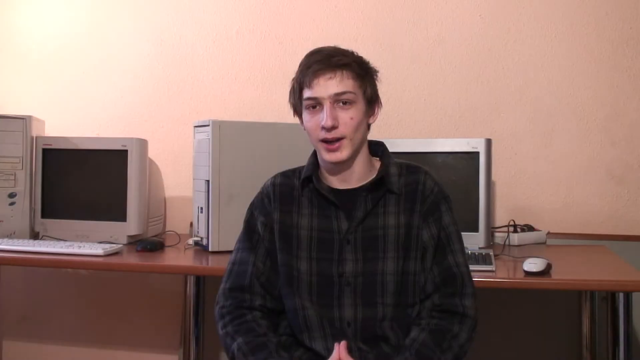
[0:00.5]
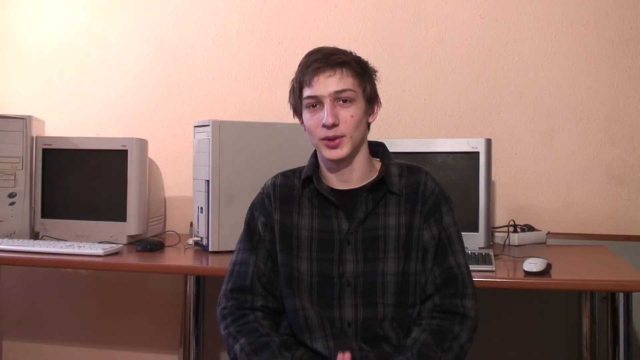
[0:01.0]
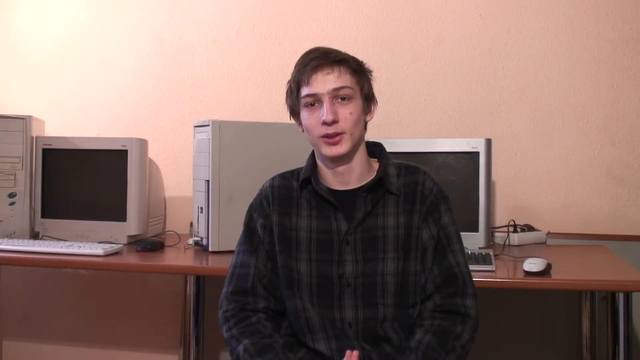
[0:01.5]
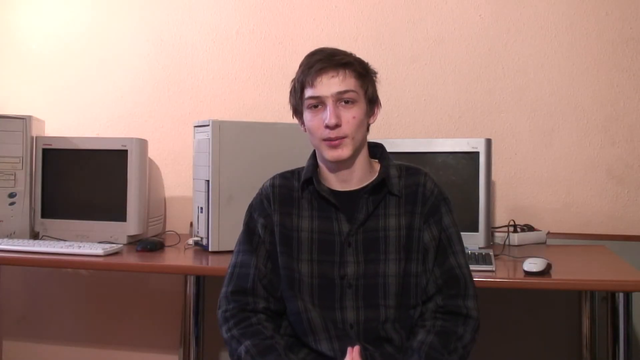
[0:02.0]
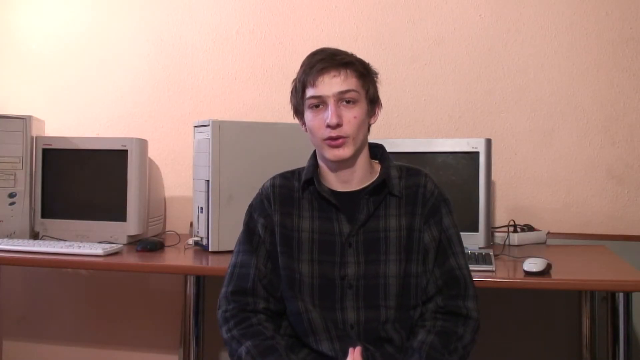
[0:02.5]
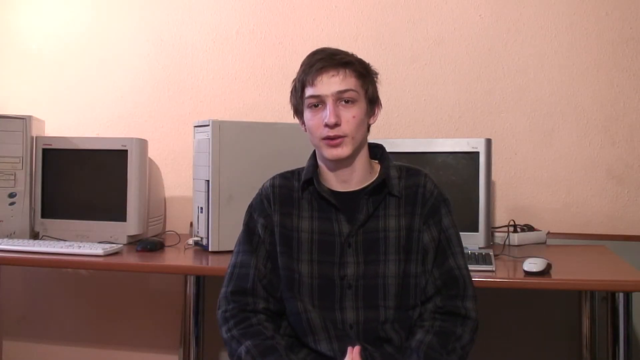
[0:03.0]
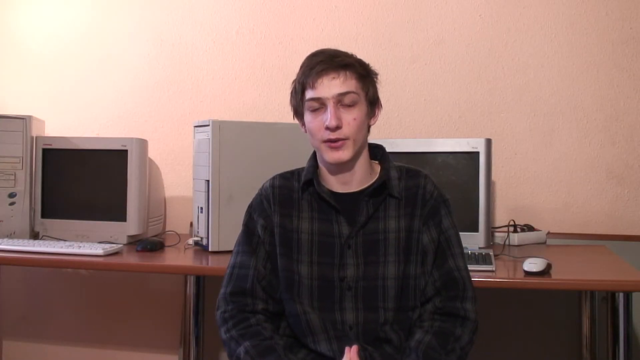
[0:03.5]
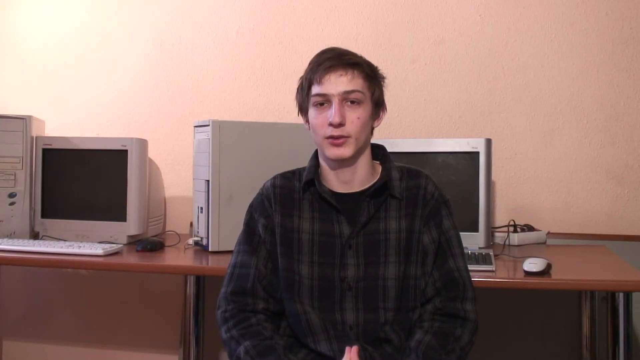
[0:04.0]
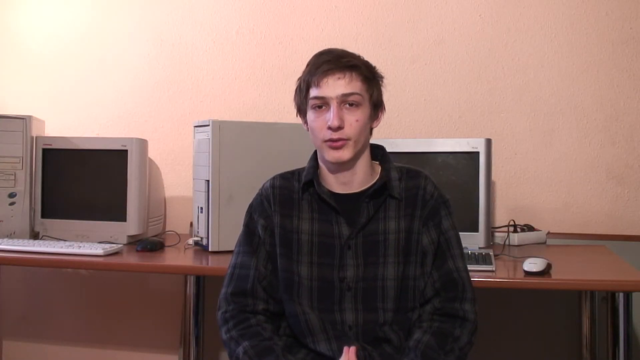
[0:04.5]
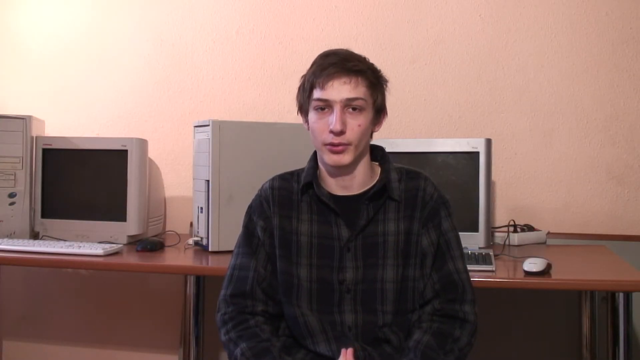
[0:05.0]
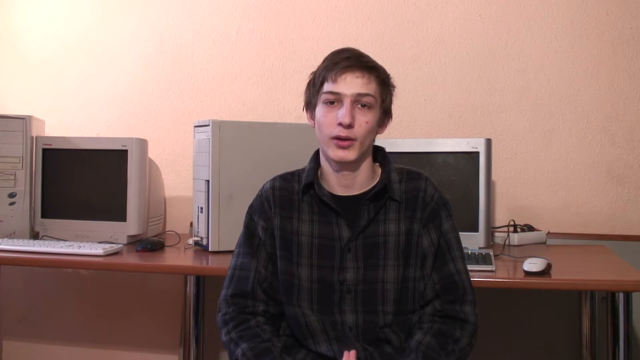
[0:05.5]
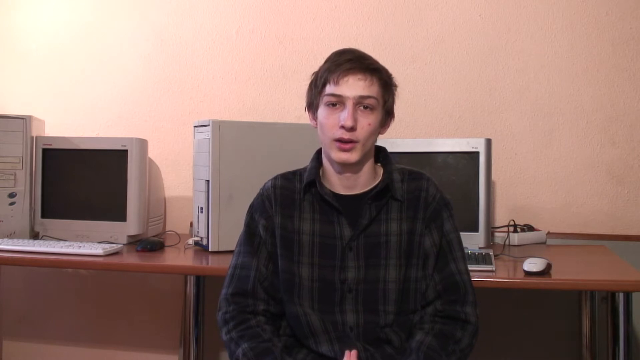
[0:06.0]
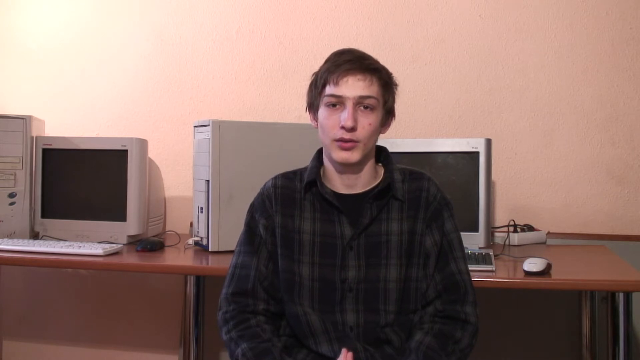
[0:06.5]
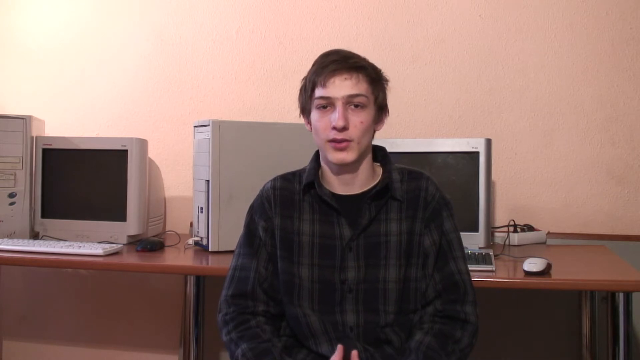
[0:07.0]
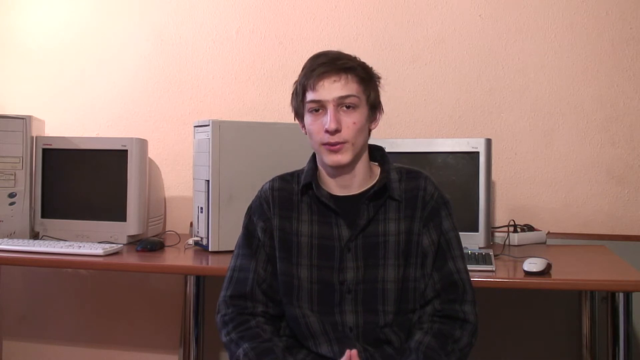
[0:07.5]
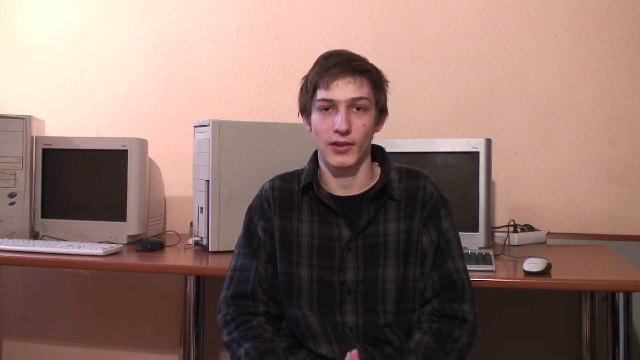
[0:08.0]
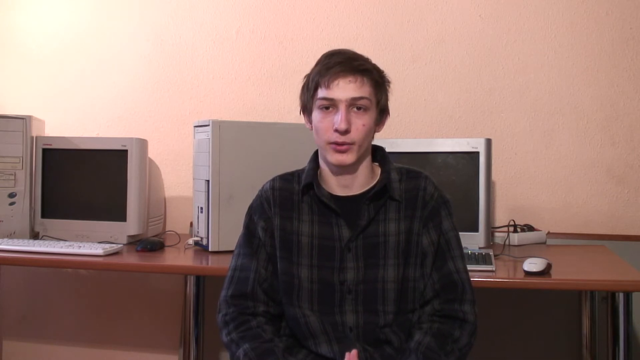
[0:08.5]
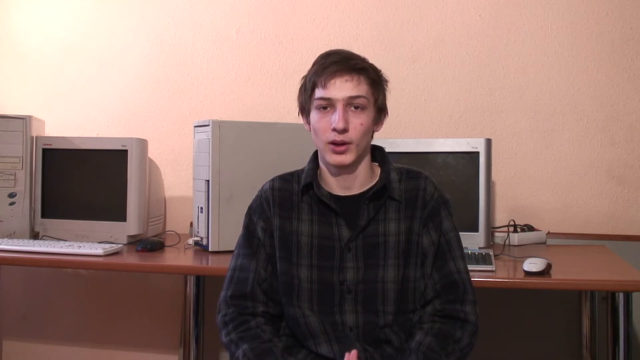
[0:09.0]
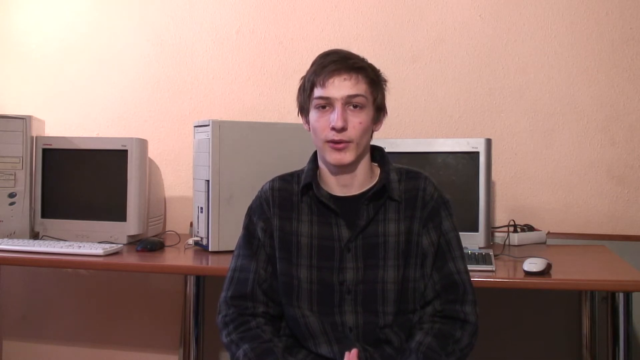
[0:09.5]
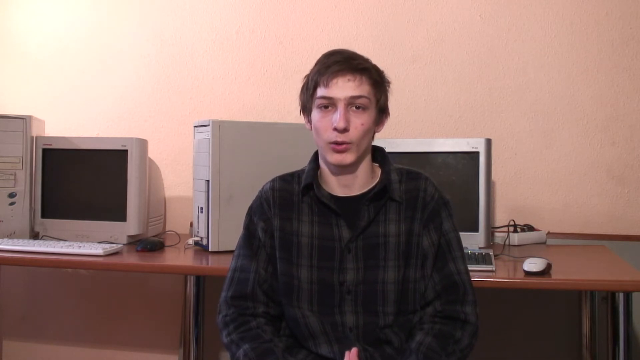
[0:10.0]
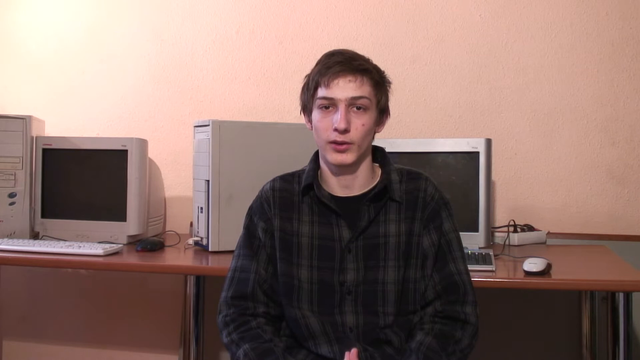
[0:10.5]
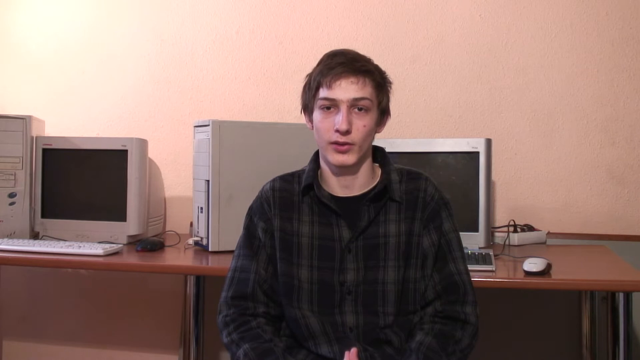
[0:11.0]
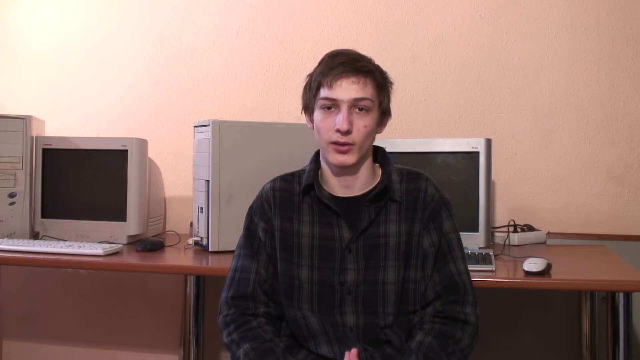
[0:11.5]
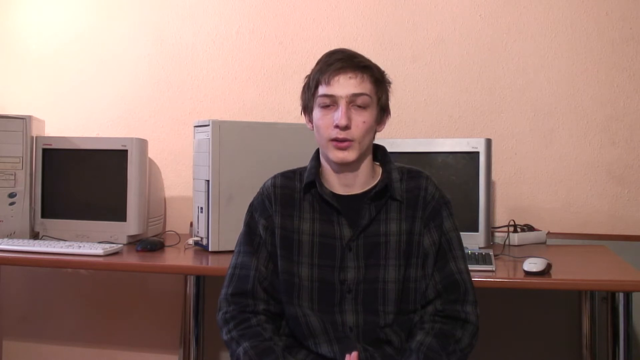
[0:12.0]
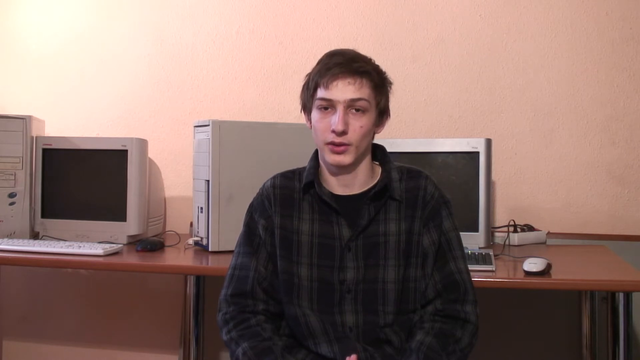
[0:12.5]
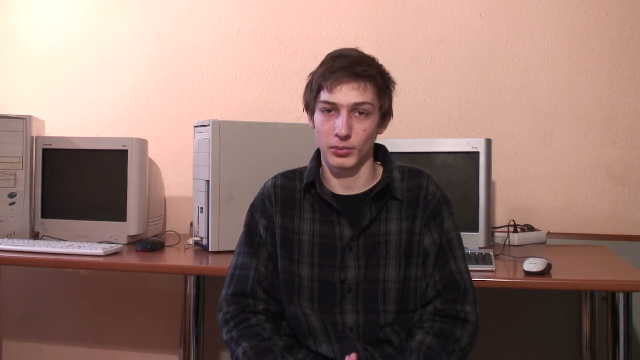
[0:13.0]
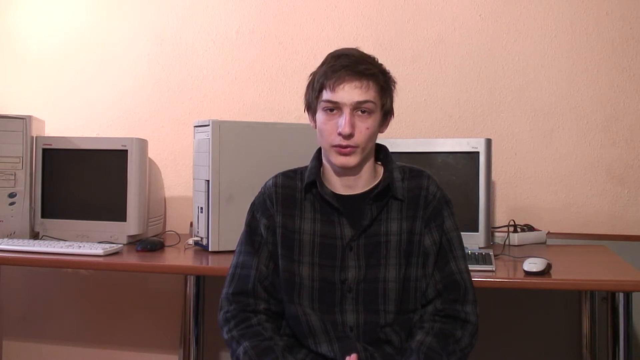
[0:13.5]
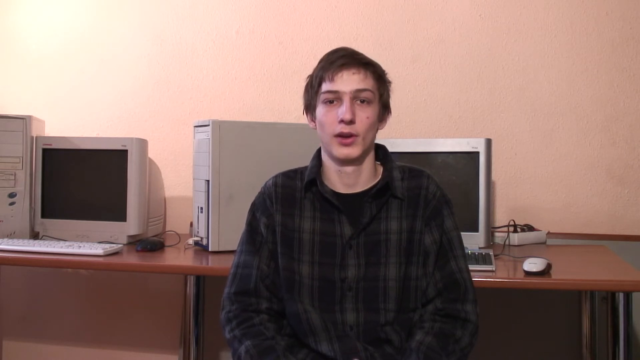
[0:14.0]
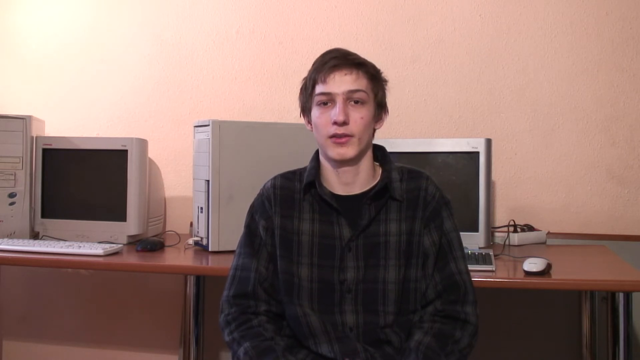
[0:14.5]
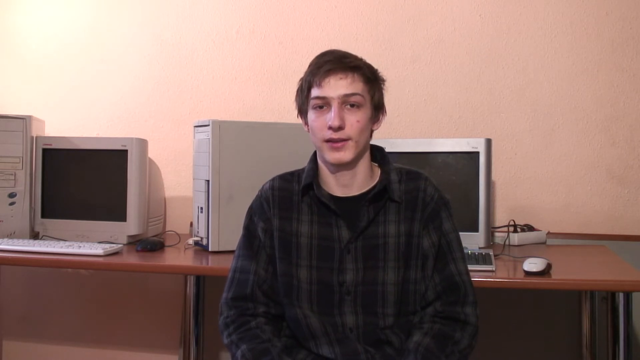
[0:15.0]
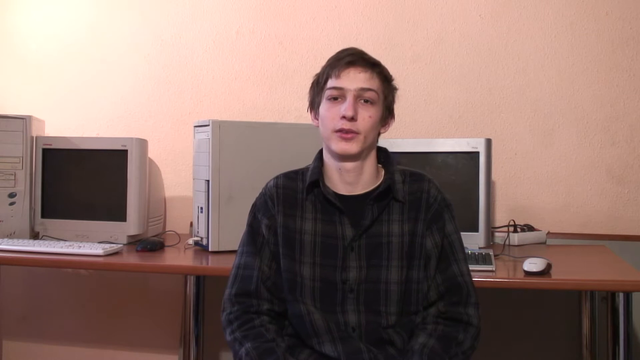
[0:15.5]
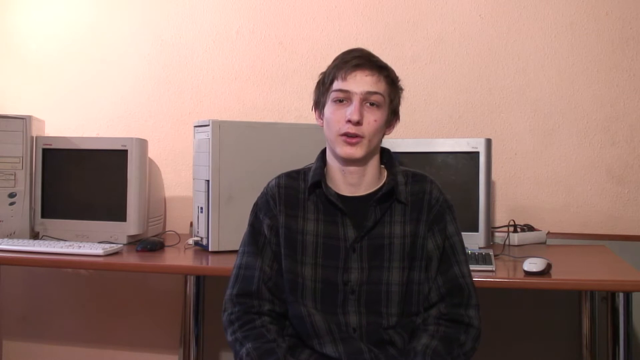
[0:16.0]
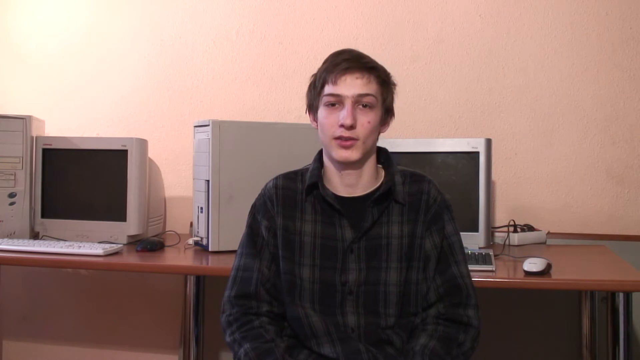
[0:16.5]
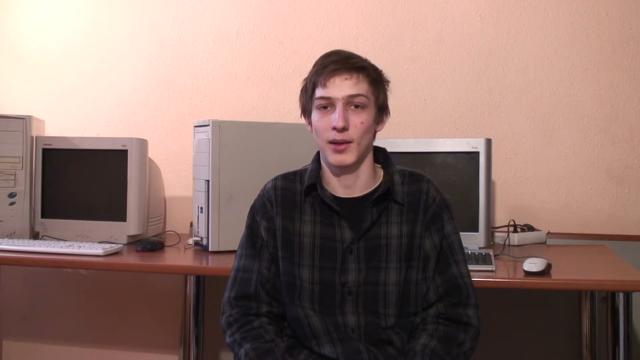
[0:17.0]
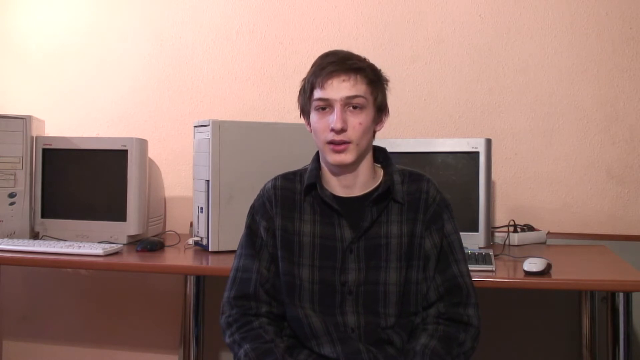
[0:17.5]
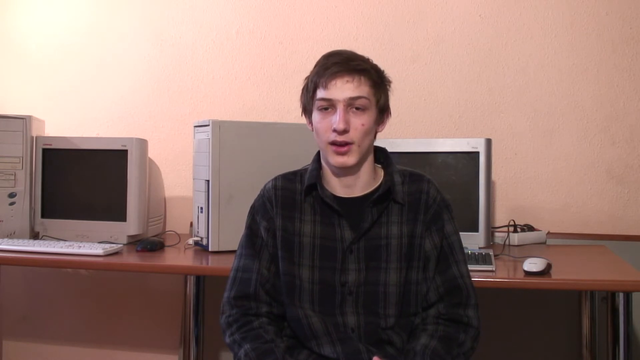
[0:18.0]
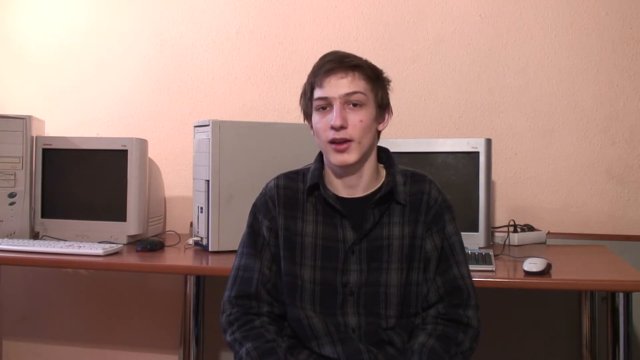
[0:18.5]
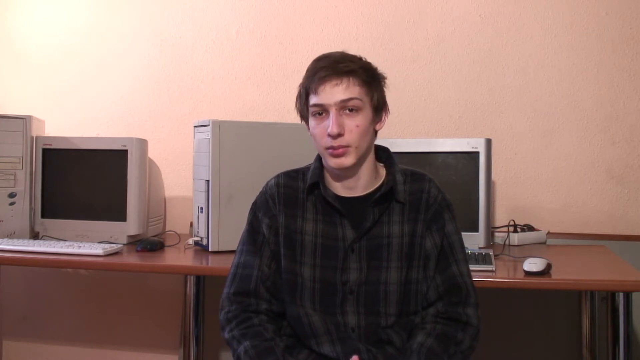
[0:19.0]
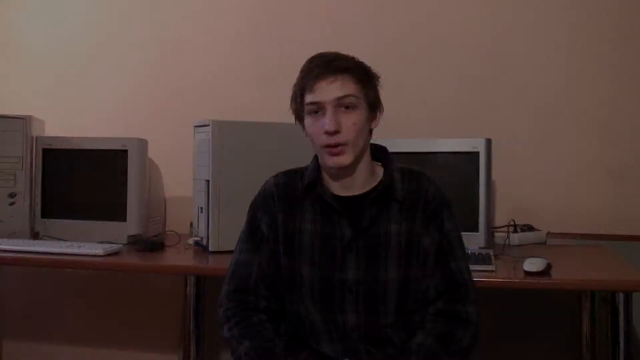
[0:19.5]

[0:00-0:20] A young brunette man, probably in his early twenties, looks straight at the camera. He wears a black long-sleeve jacket or long-sleeve shirt; it is hard to tell in the lighting. He is sitting in front of a desk with two old desktop computers, both using old-fashioned CRT monitors. There is a mouse on the desk, and both PCs have full hardware keyboards. Afterward, what appears to be a Windows desktop screen is briefly shown.